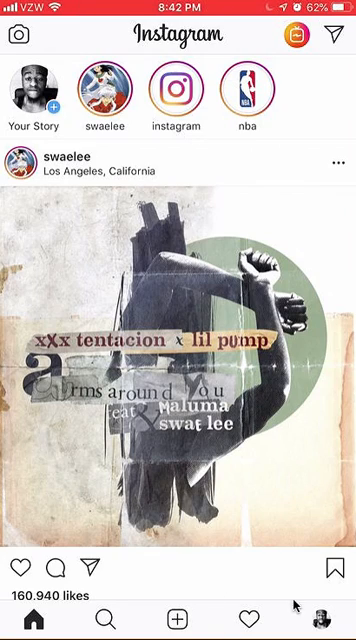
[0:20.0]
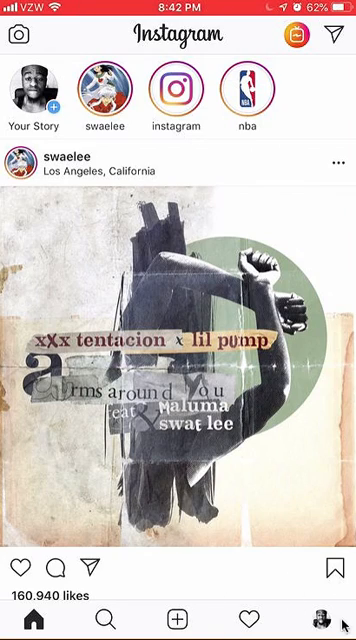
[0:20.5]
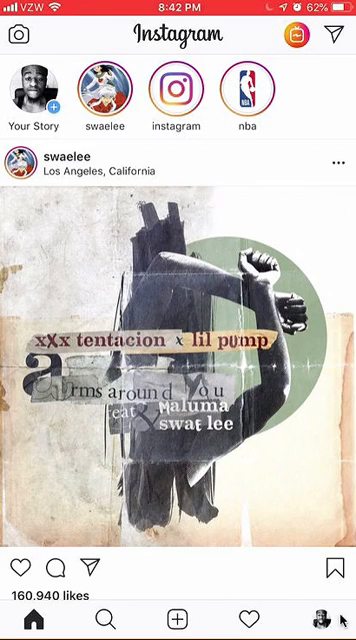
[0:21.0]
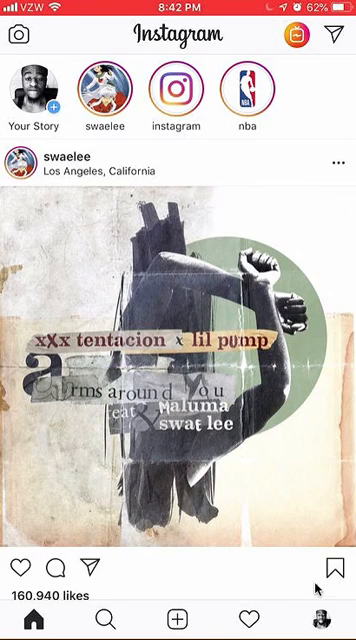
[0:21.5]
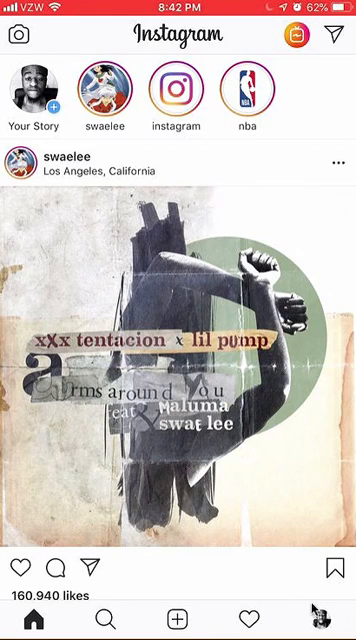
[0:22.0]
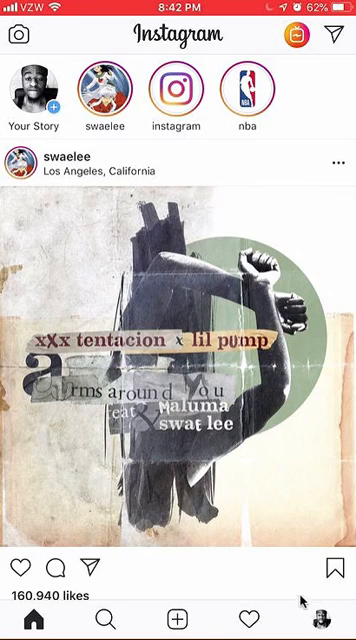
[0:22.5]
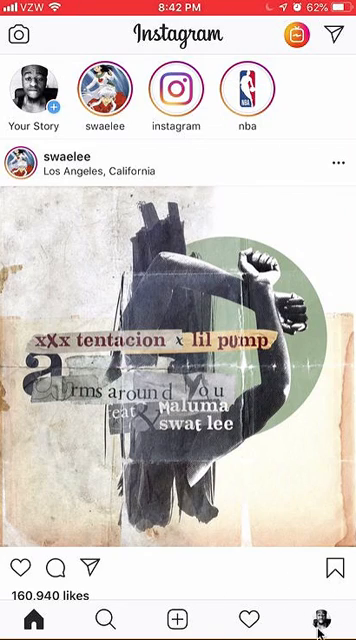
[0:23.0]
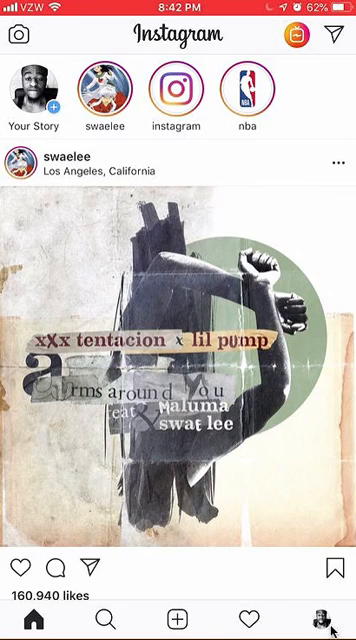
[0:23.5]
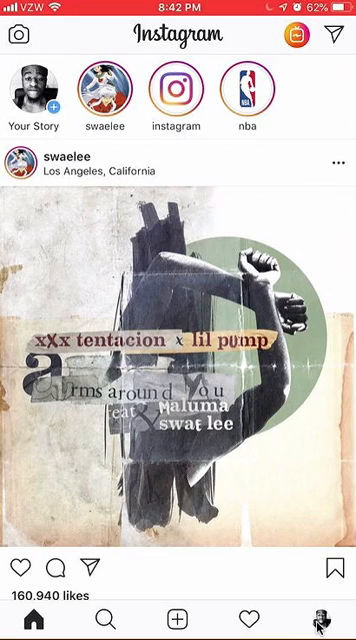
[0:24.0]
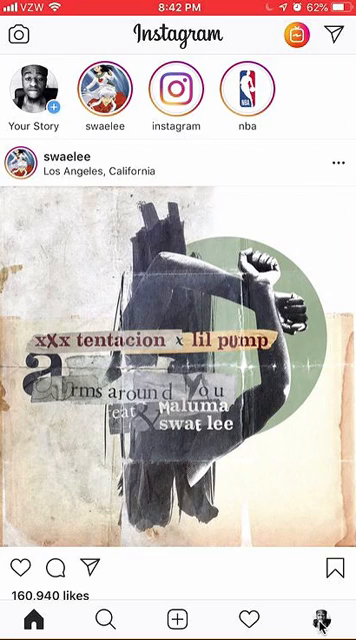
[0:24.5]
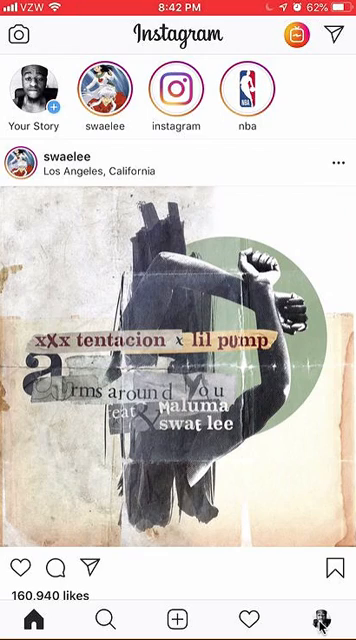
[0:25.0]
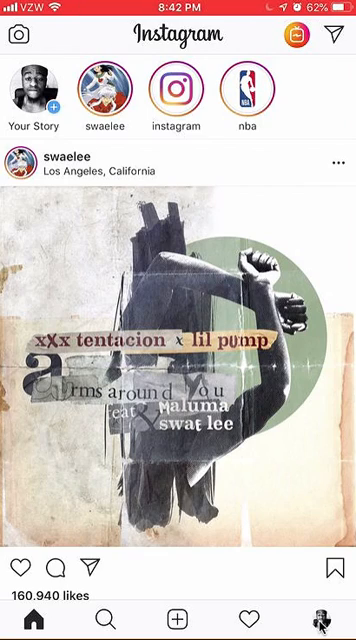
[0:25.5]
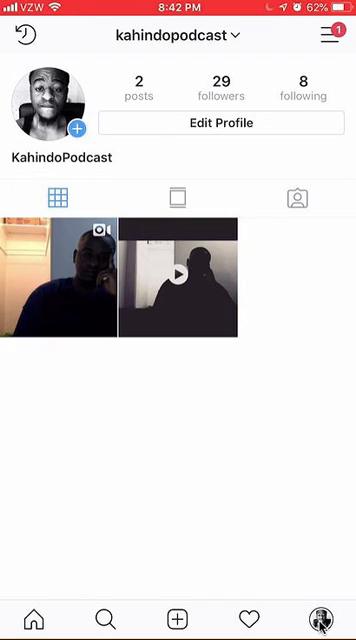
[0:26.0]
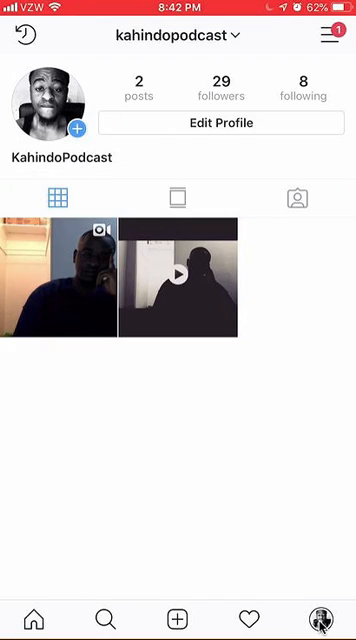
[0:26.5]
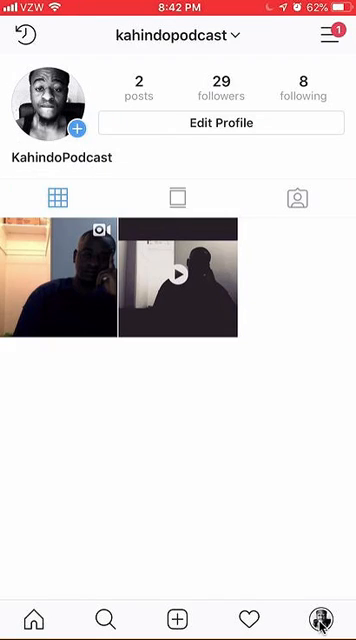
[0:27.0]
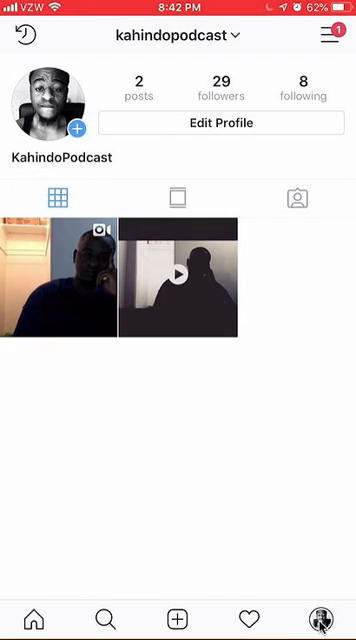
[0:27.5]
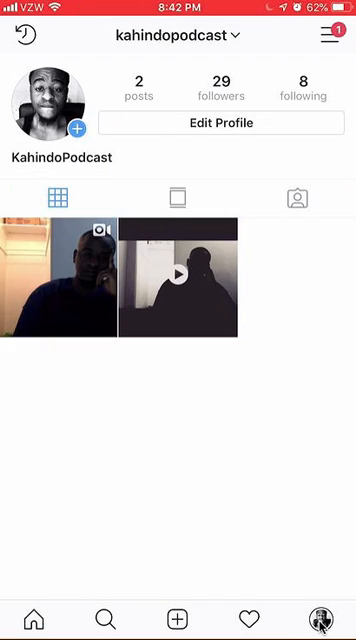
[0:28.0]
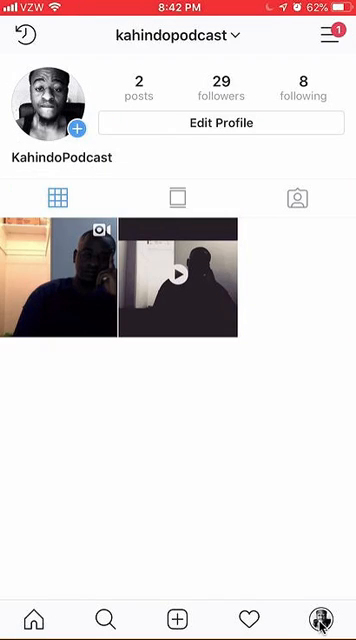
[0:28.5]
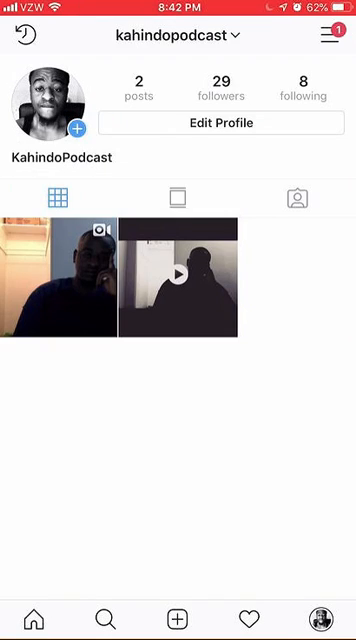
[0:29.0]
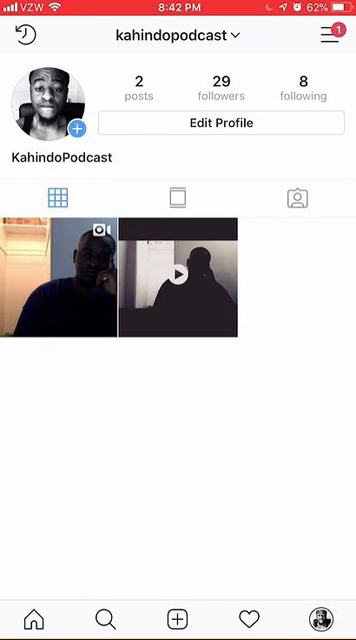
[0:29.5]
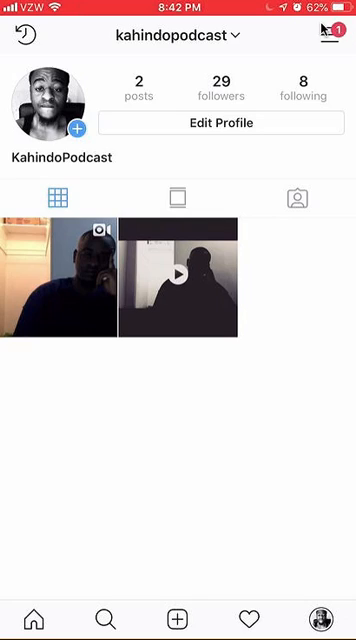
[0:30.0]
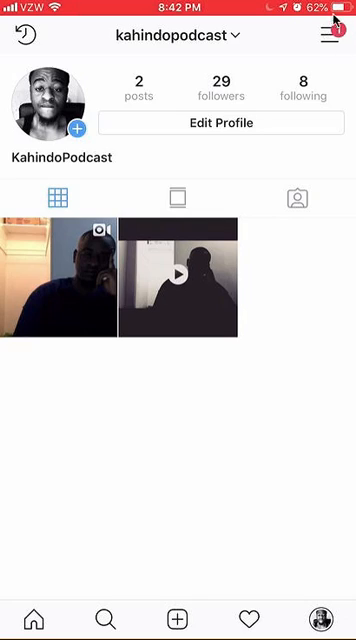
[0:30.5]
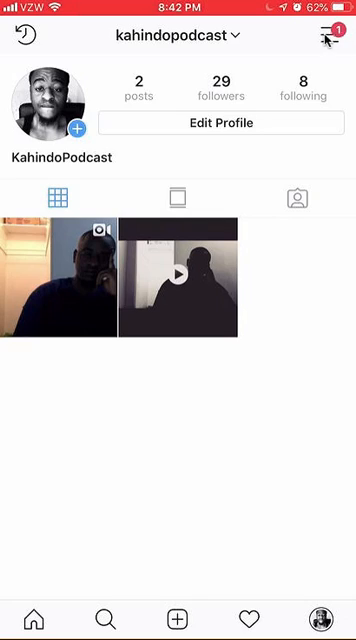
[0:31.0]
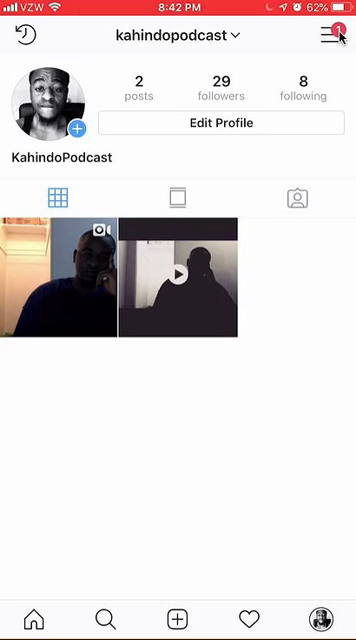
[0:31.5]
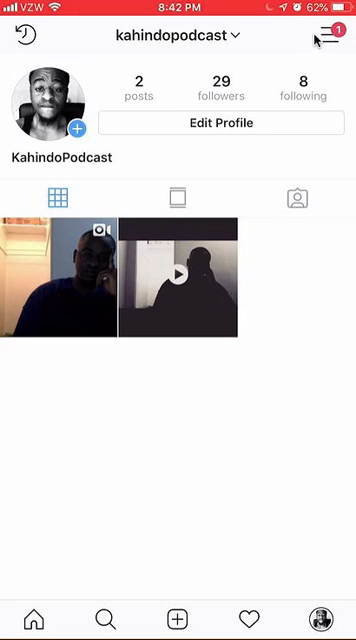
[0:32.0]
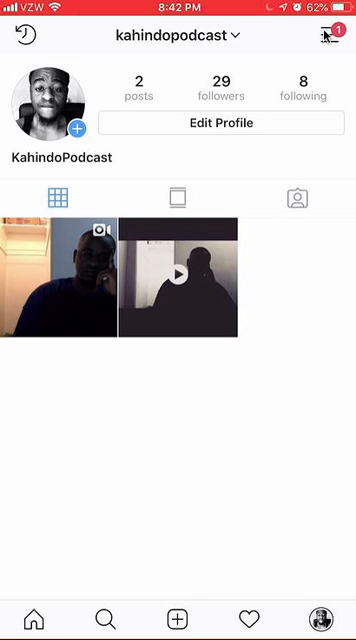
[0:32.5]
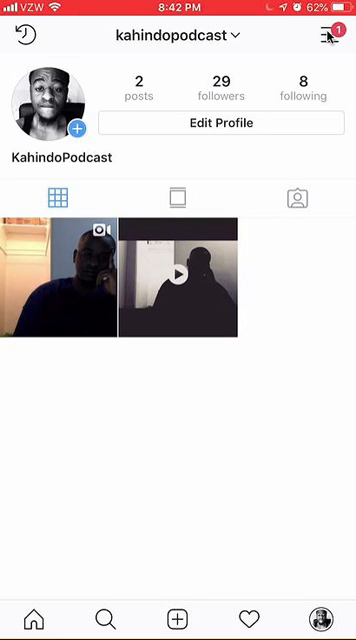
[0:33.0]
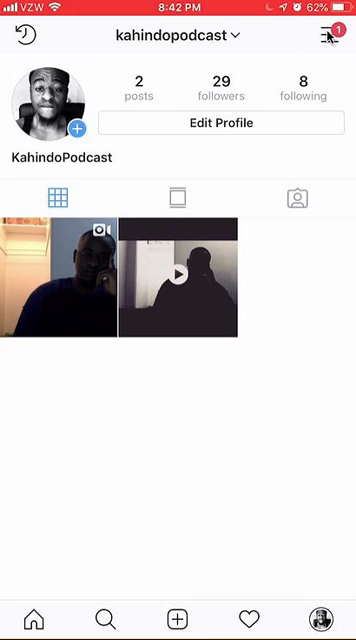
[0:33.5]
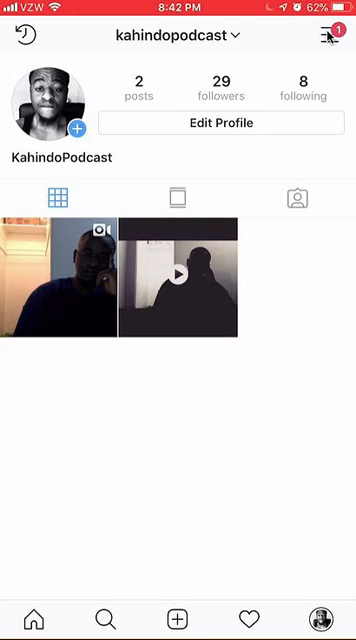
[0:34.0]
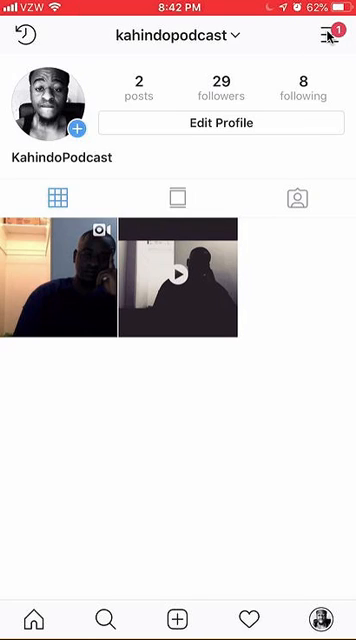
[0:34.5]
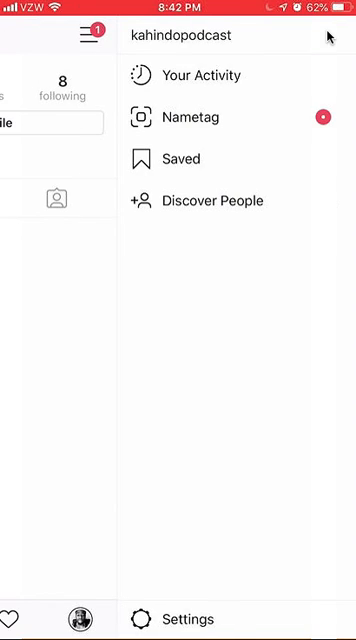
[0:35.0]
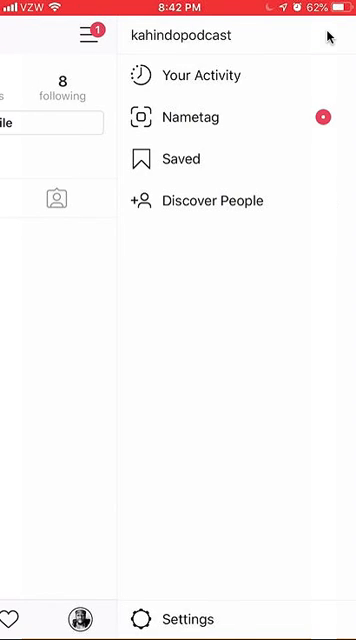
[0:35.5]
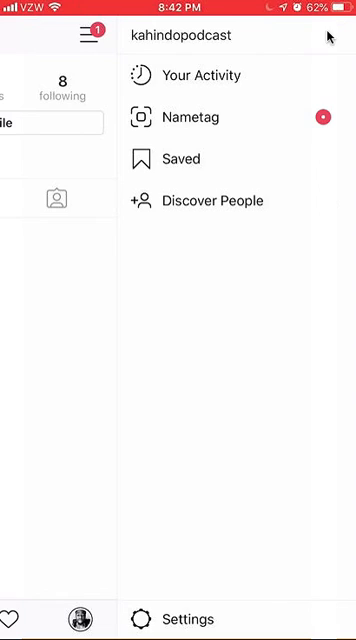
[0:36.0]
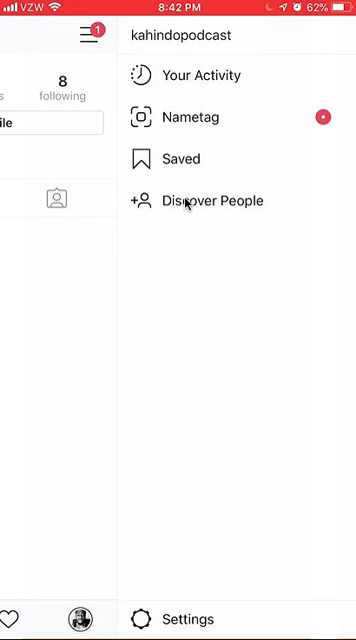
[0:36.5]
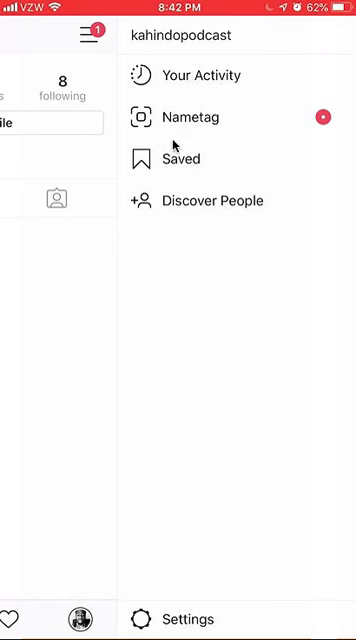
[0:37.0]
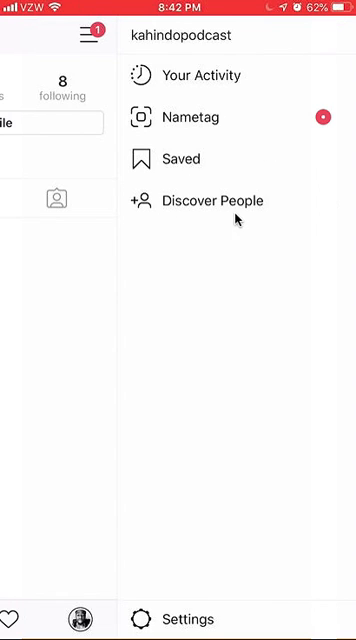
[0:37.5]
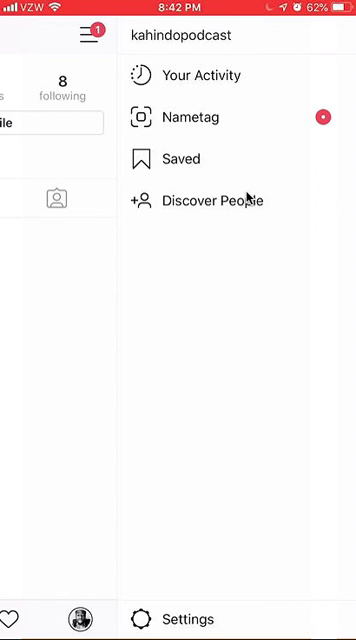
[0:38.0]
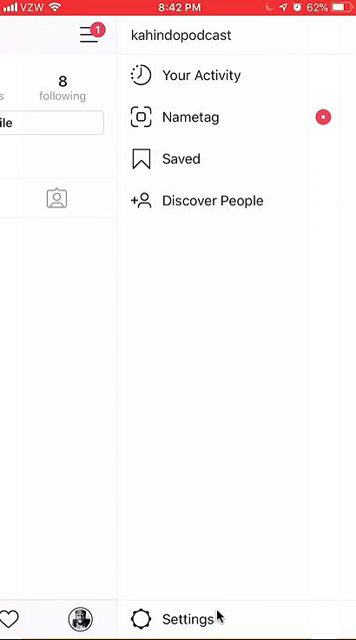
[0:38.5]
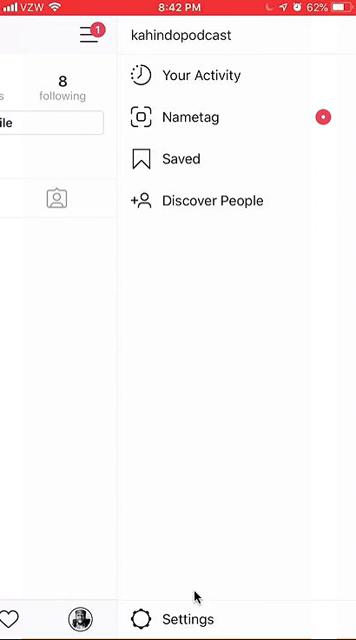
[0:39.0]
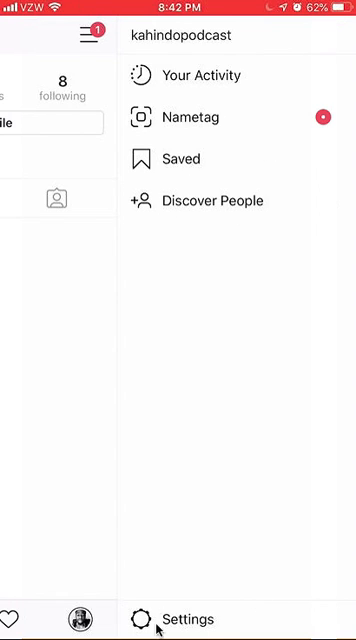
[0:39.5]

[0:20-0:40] The iPhone screen, on the Verizon network, shows 8:42 PM and a battery strength of about 62%. The Instagram page is white, in day mode rather than night mode, and shows a post from Sway Lee, apparently from Los Angeles, California. The post looks like an artistic mixtape cover in a pastel watercolor format. The background texture is an off-white, semi-stained, rustic watercolor: the top third is white/gray watercolor and the lower two thirds is a parchment-type tan, apparently also watercolor. On top of that is a muted, pastel green or mint green circle. On top of the circle is an abstract shape that looks like a tree trunk, made of graphite gray or black watercolor ink, and emanating from it are two arms that appear to be the same person's. They are positioned as if chained together in a handcuff and are balled up. The lettering reads "XXXTentacion X Lil Pump" and then "arms around you", which has a gray background with black and grayish lettering. The "XXXTentacion" and "Lil Pump" lettering is maroon, or kind of an off-brown burgundy. Text at the bottom, below "arms around you", includes the name Swaley, apparently the originator of the post. The cursor circles just under the bookmark, then clicks on the Khindo podcast icon. It then circles an icon in the upper right-hand corner, three parallel lines that serve as an icon for more settings, and clicks it, opening the settings of the Khindo podcast. An icon of two people is visible, apparently people in the podcast or communicating with each other, along with a video and what looks like maybe an Instagram story.